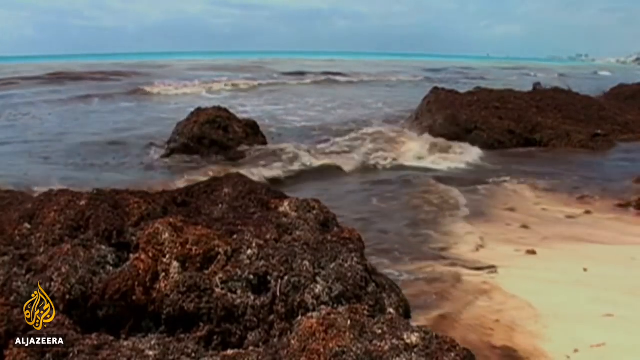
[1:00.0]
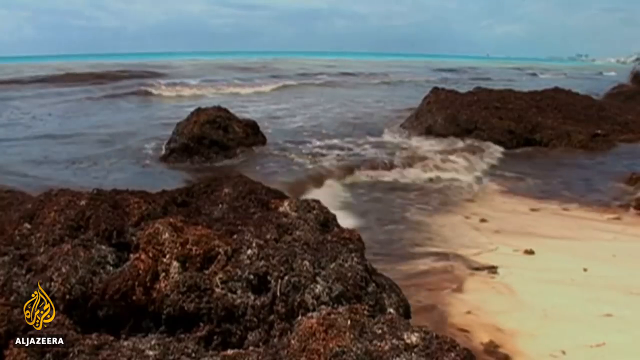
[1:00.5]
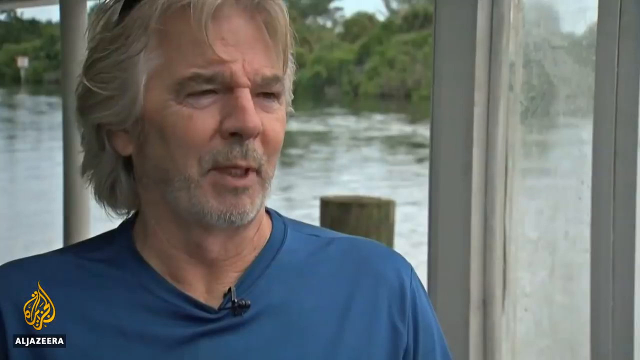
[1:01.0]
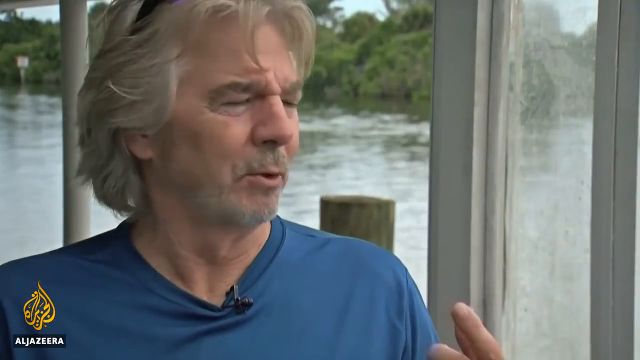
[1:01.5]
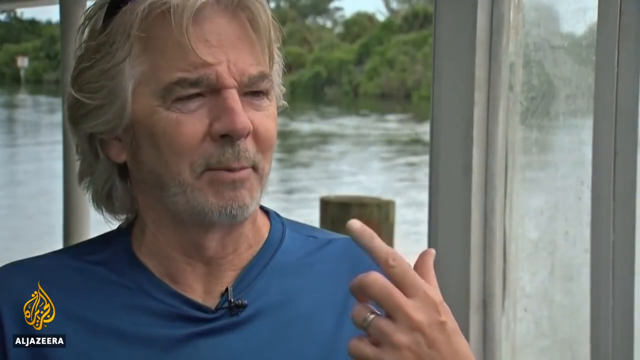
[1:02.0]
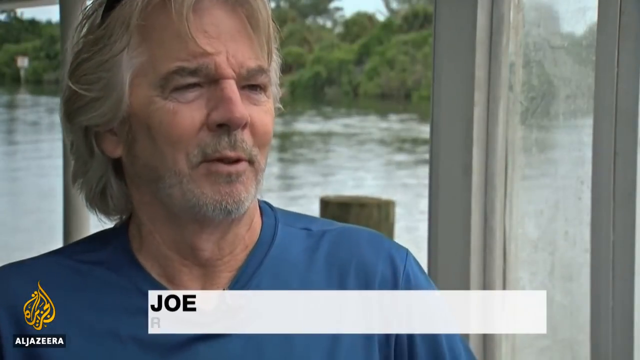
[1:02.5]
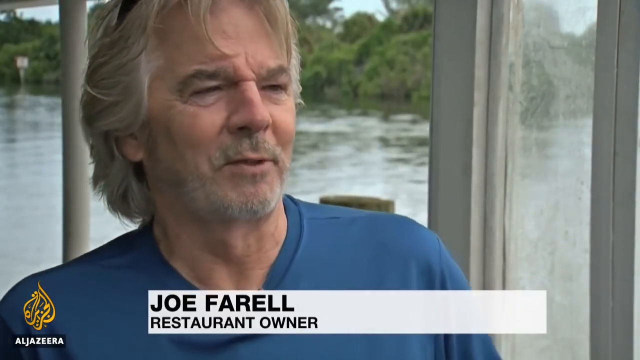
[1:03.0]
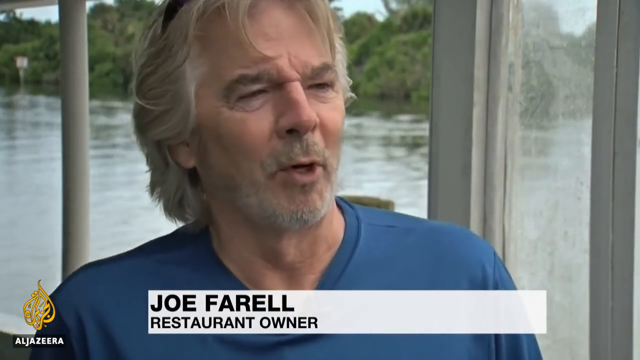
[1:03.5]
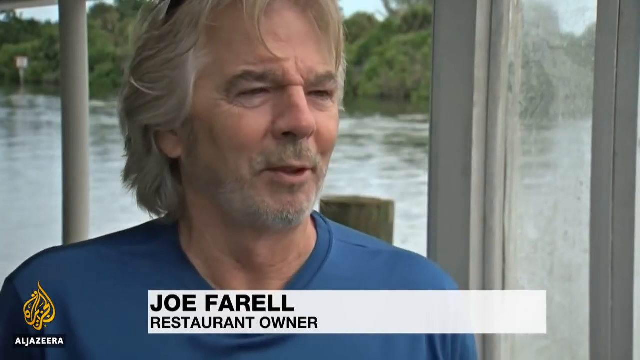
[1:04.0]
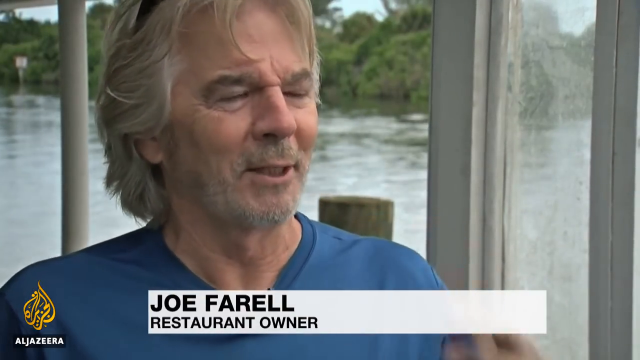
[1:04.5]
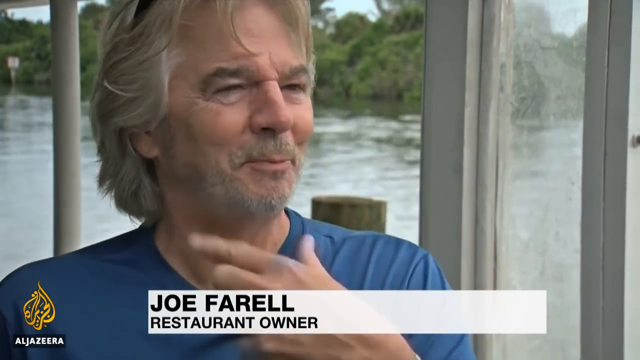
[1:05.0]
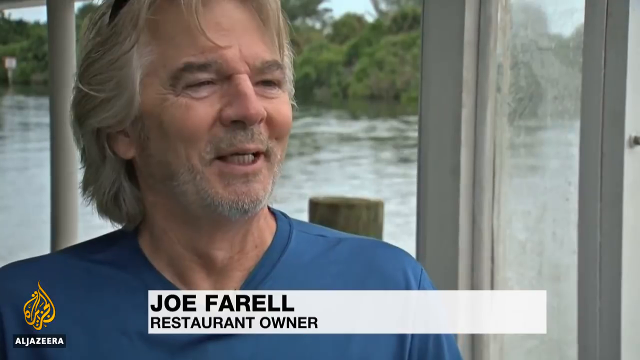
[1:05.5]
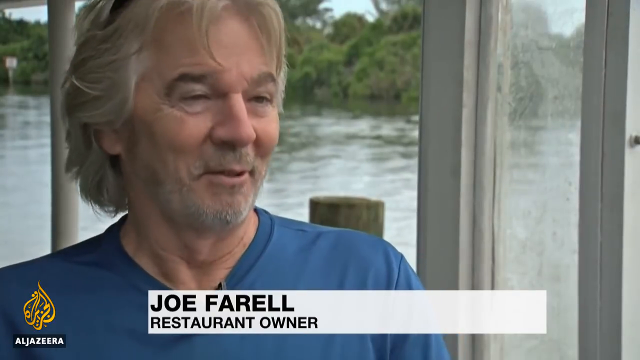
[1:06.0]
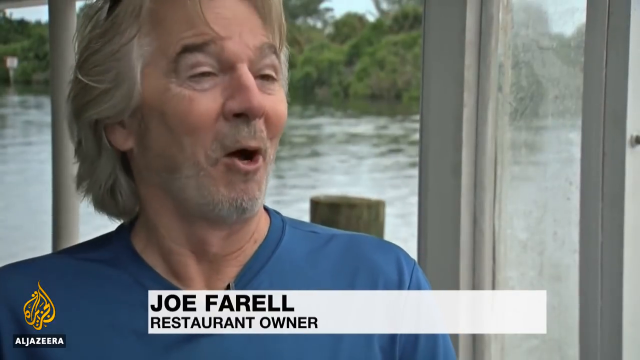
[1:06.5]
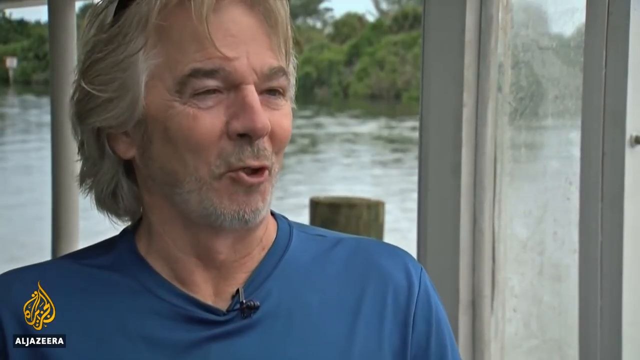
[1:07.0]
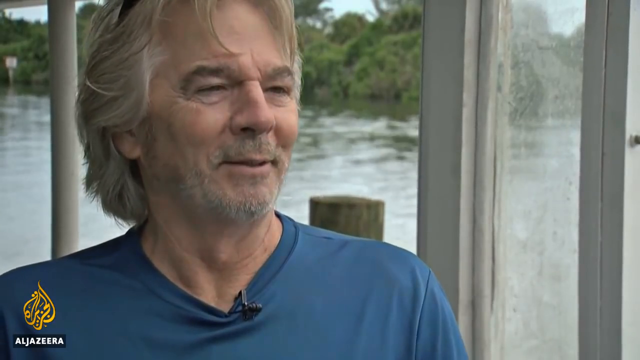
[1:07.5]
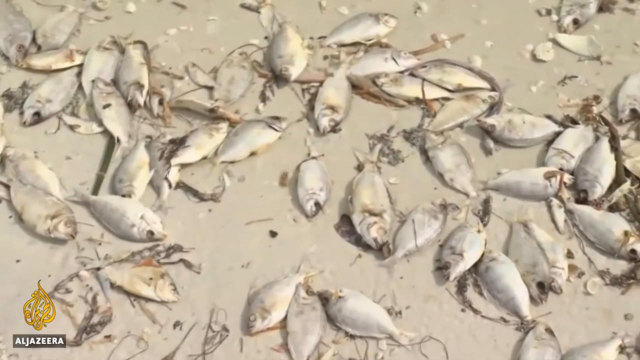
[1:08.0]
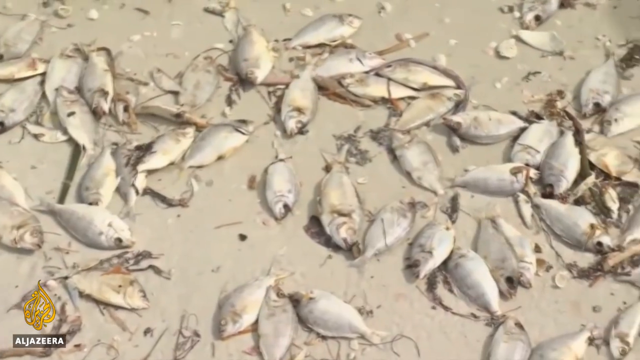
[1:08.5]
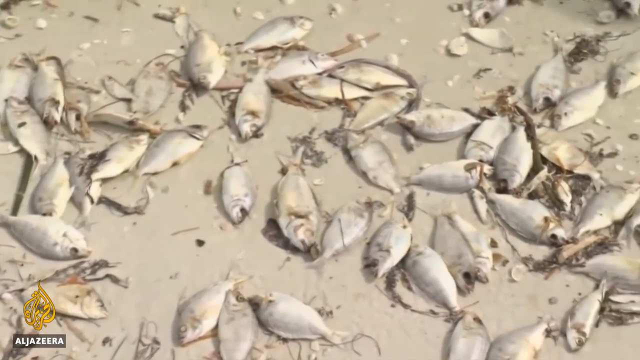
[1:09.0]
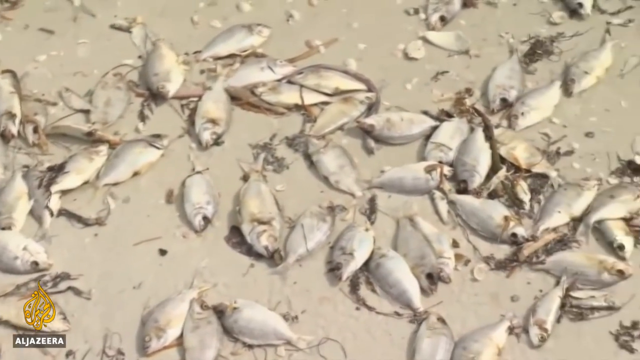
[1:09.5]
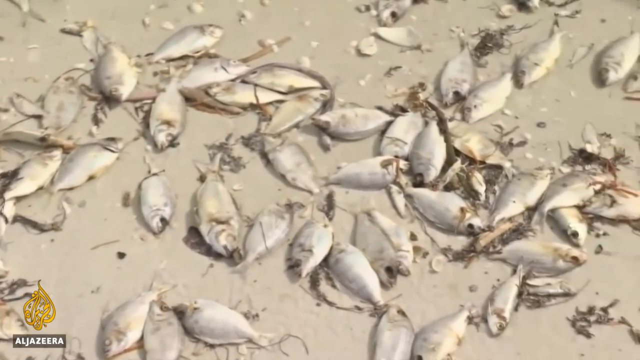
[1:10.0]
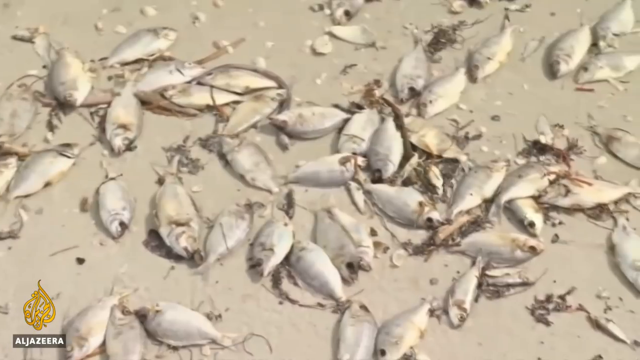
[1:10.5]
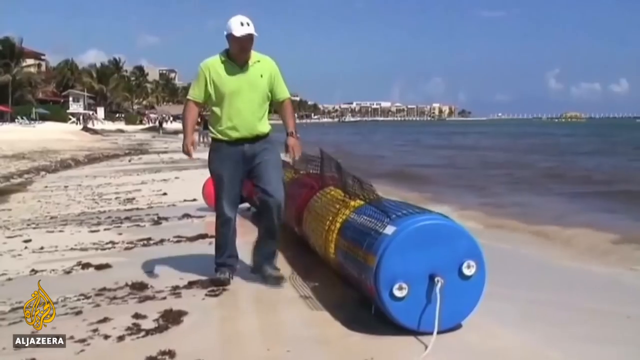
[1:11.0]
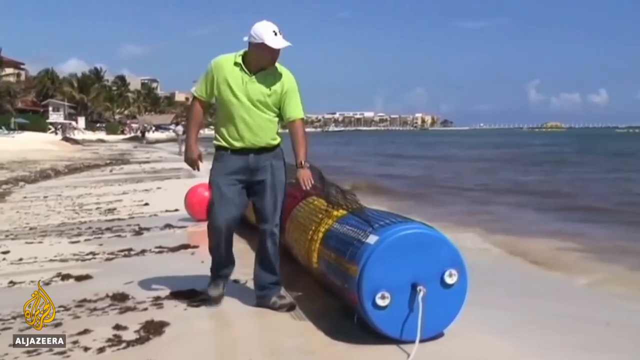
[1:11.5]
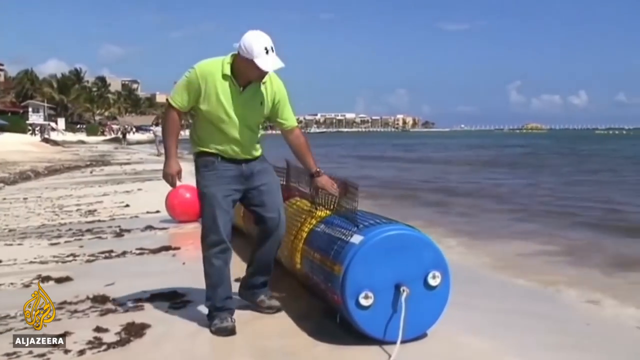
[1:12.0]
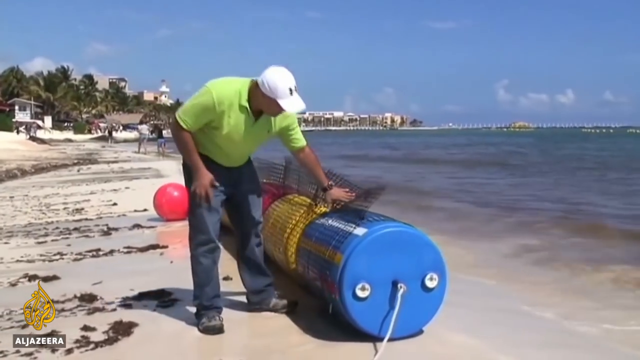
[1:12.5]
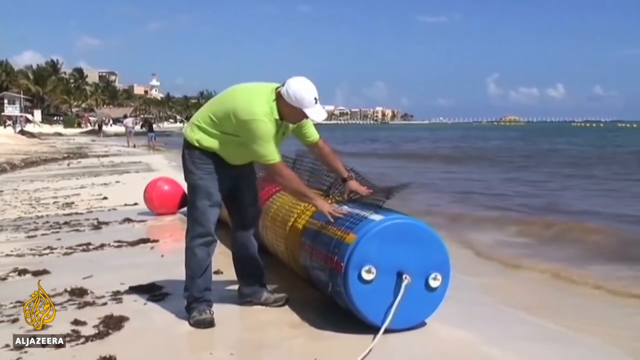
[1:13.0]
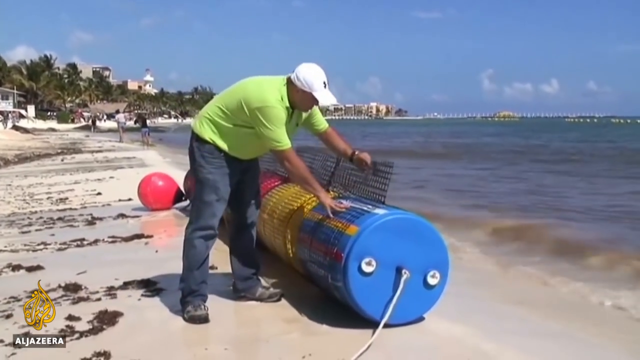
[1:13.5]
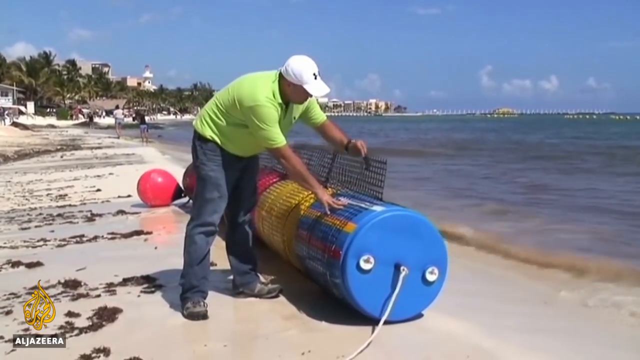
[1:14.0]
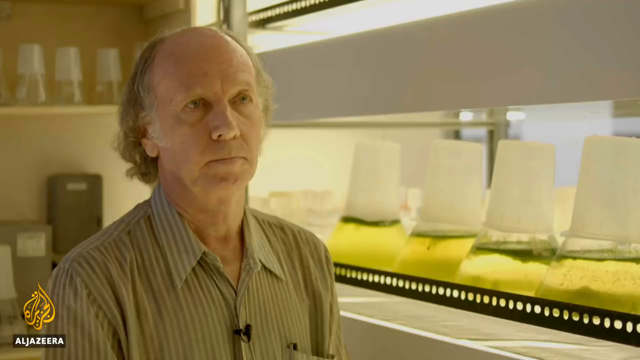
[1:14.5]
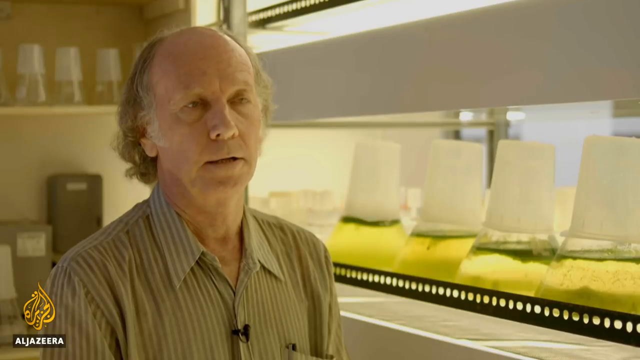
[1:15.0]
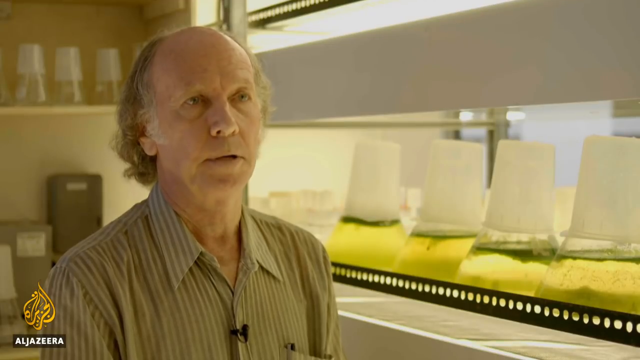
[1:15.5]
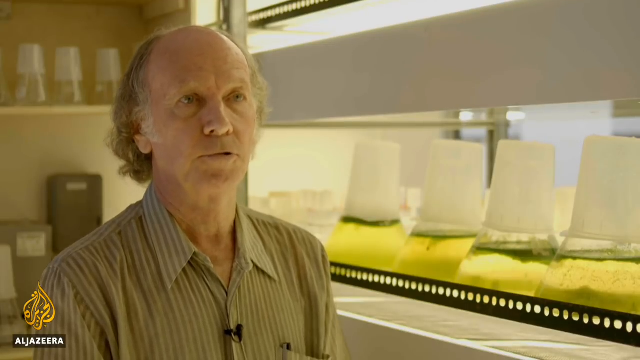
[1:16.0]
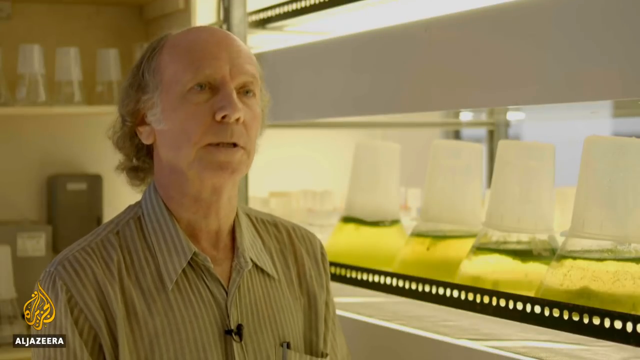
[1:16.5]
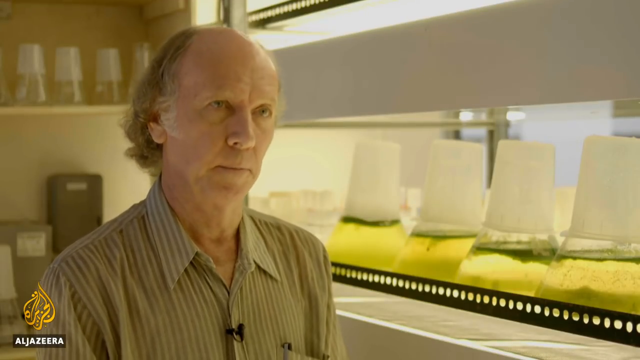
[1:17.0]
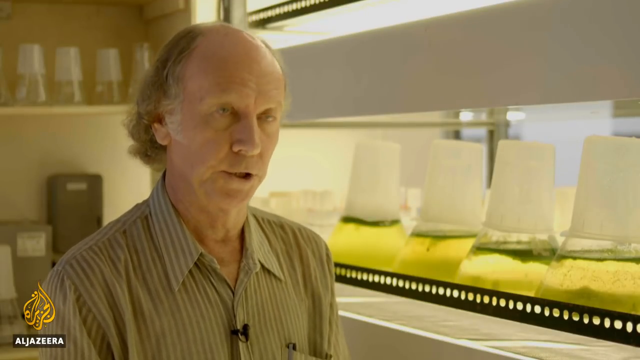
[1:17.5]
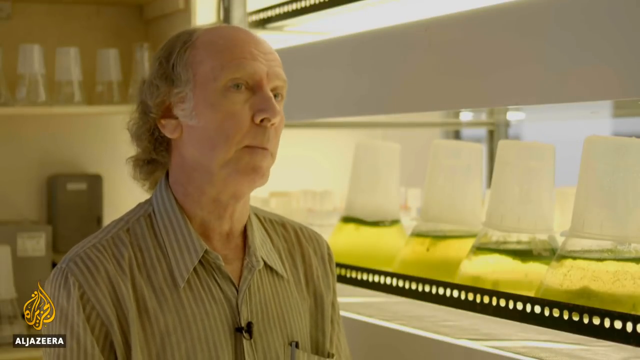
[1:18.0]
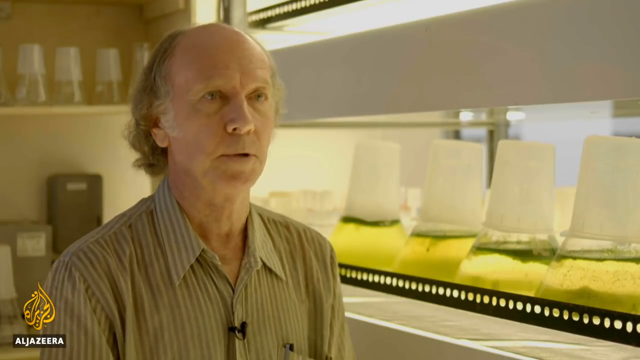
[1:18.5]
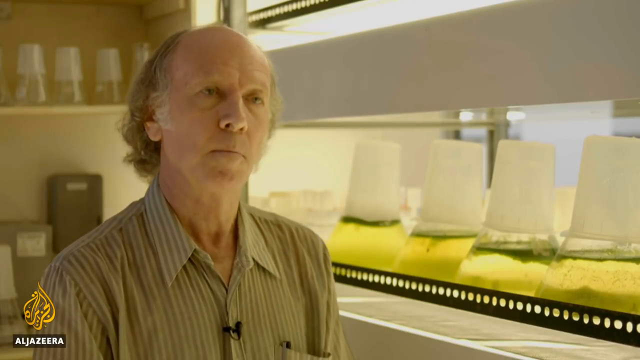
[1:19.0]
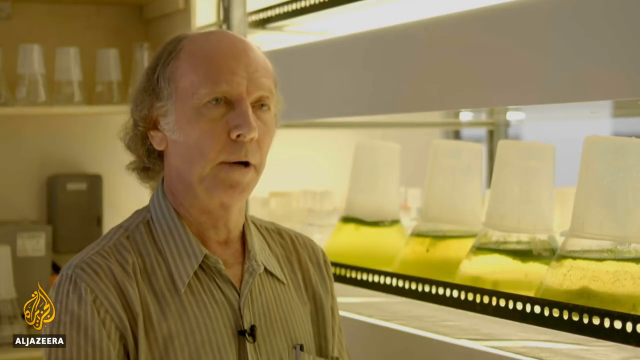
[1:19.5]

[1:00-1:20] Water washes up on the rocks, then the video cuts to a man with water behind him and trees beyond that. On the right appears to be a window or something similar; it is unclear whether he is sitting outside or a door is open. He has longer whitish-gray hair, a little stubble on his chin, and a darker blue shirt. He is identified as Joel Farrell, a restaurant owner. He talks, enunciating strongly and gesturing with his hand on the right side, kind of pointing toward the viewer's left, and bobs his head up and down. The video cuts to a beach with many dead gray fish all over it as the camera pans from left to right. A man in blue jeans, a yellow shirt and a white hat bends down on the beach looking at a blue barrel and doing something with it; he looks like he is getting ready to roll it into the ocean. The video cuts back to the bald man sitting in a small lab, talking.